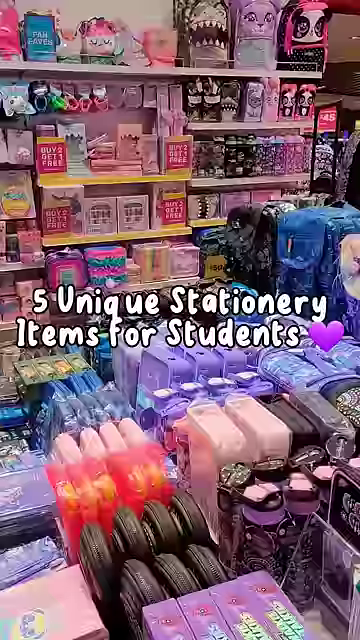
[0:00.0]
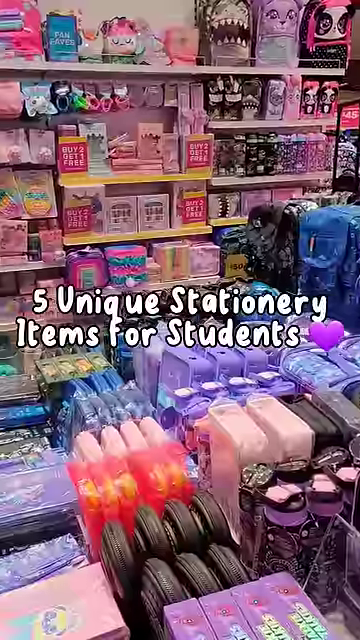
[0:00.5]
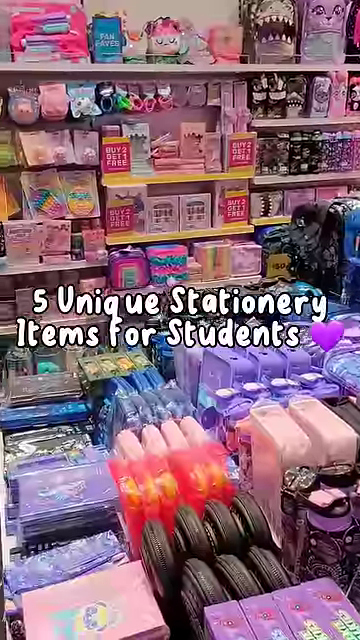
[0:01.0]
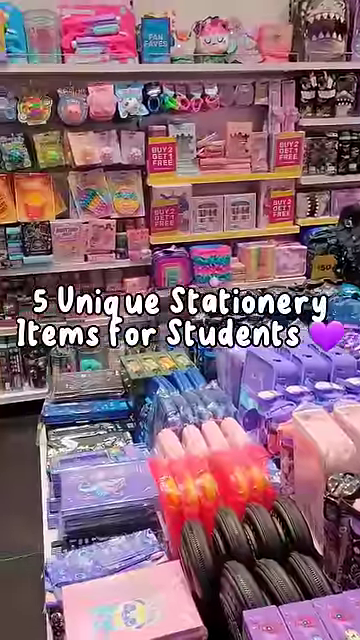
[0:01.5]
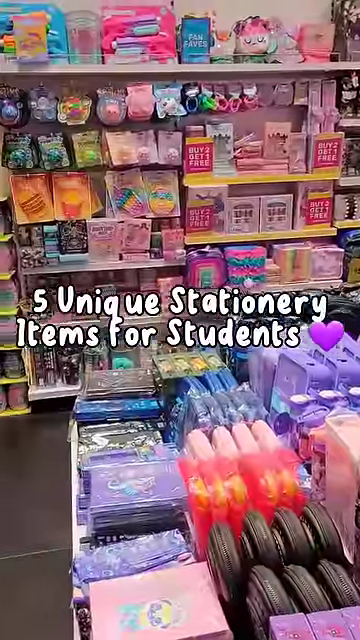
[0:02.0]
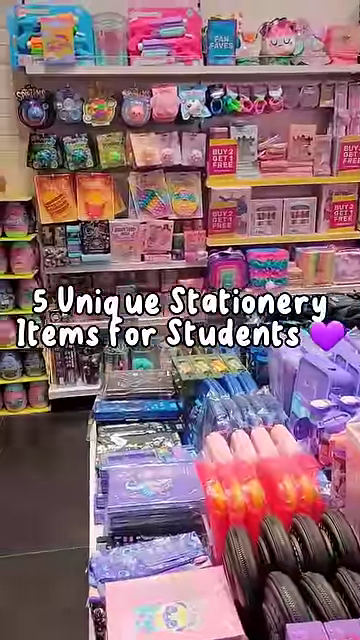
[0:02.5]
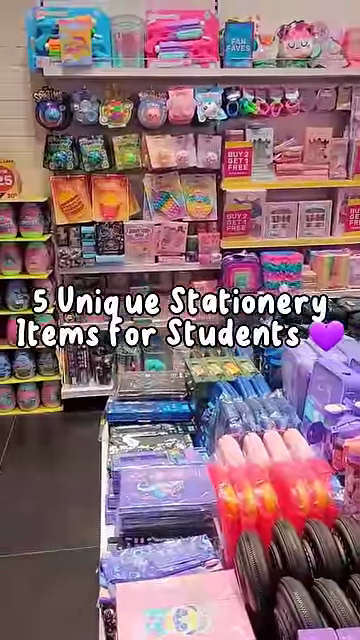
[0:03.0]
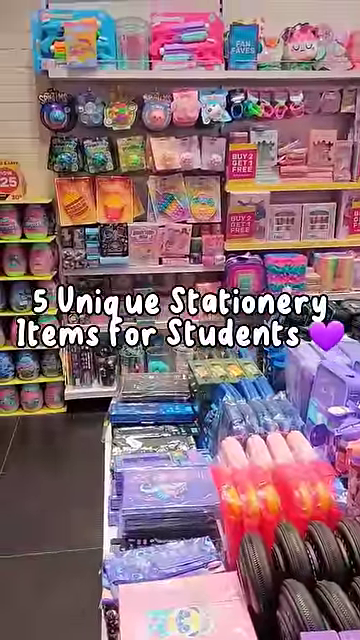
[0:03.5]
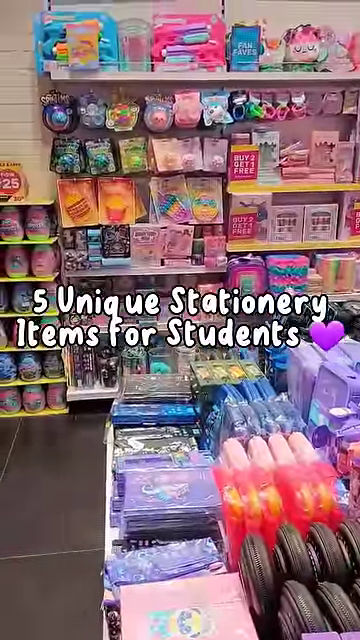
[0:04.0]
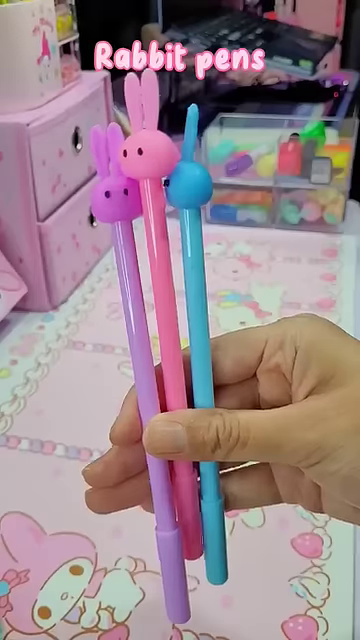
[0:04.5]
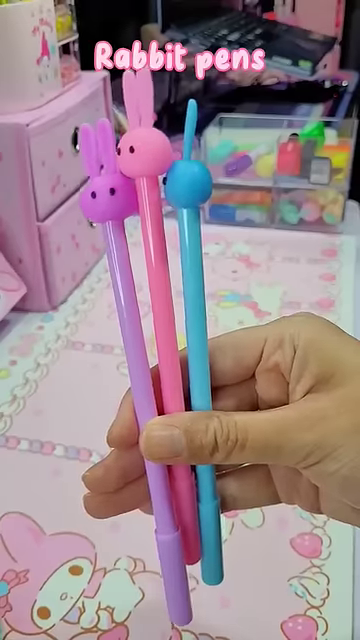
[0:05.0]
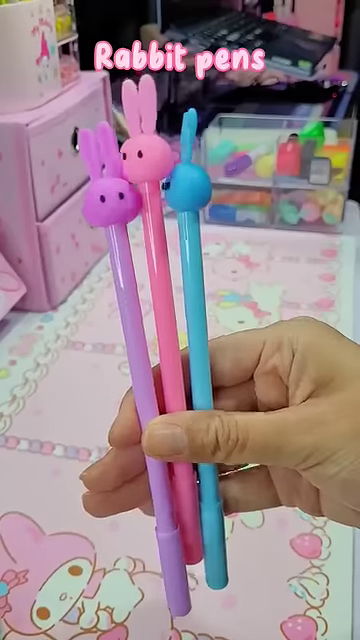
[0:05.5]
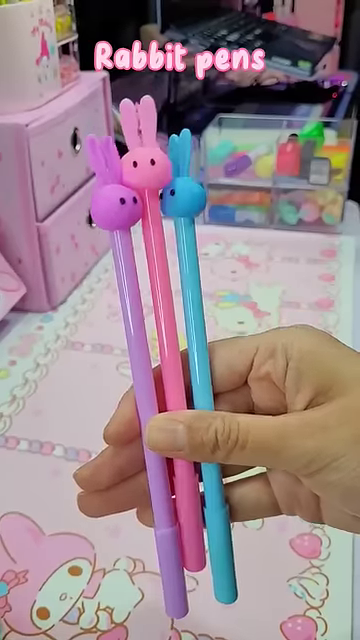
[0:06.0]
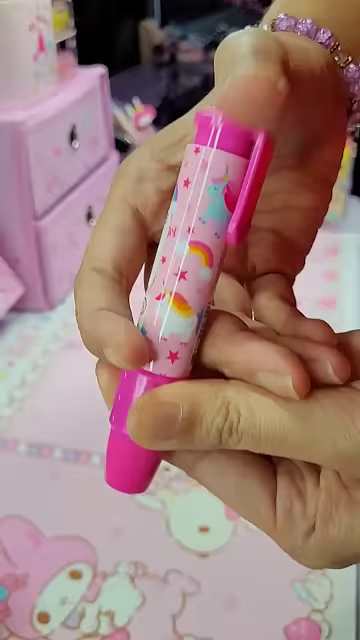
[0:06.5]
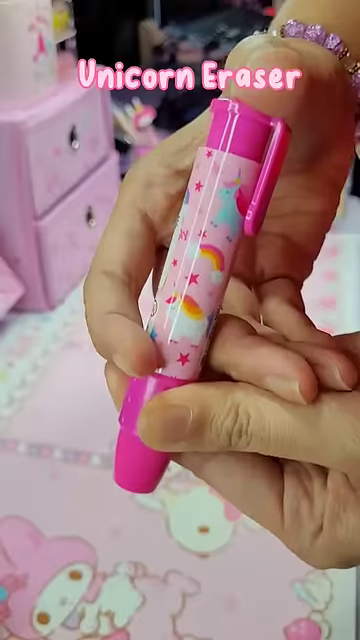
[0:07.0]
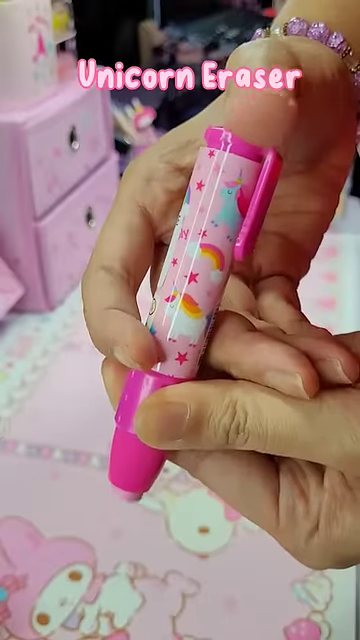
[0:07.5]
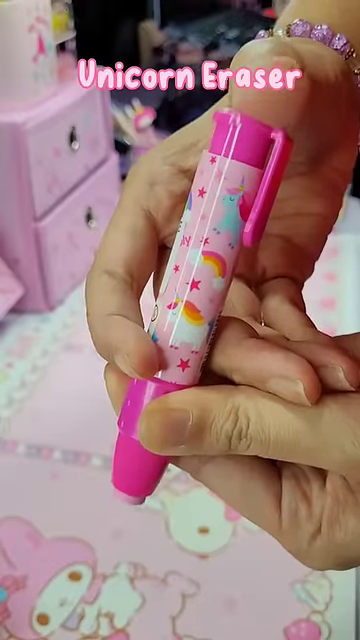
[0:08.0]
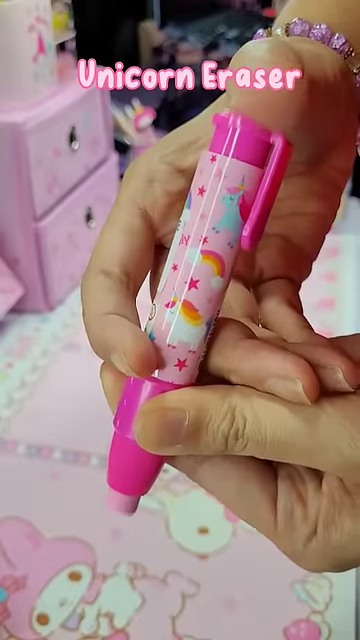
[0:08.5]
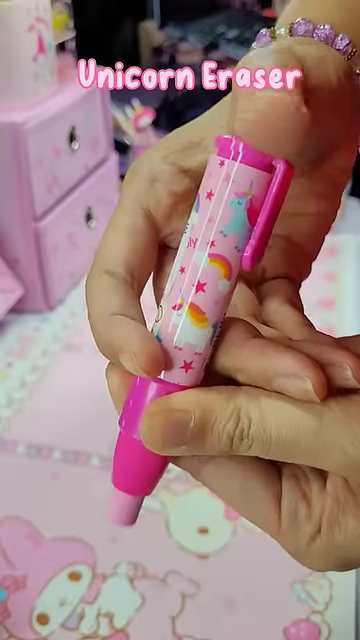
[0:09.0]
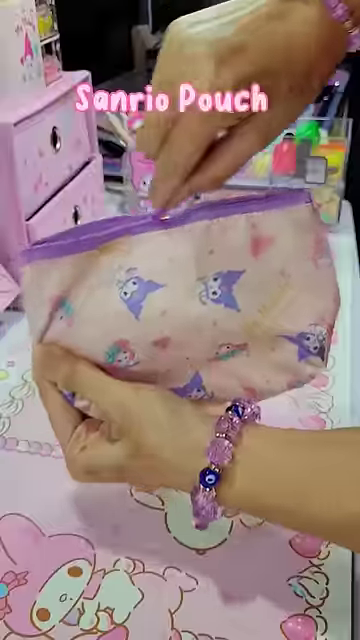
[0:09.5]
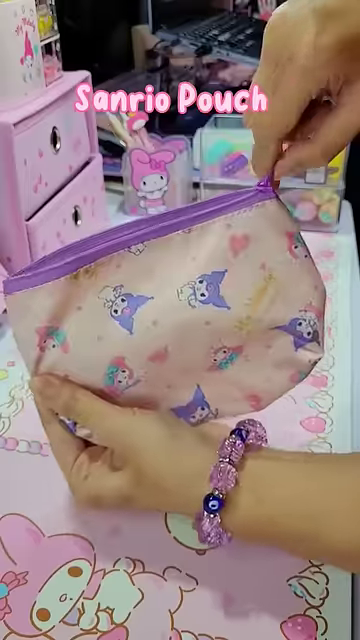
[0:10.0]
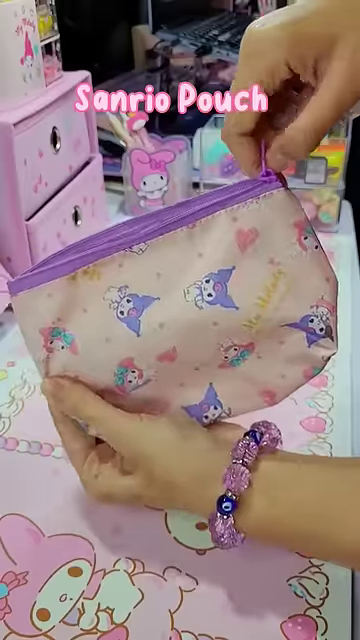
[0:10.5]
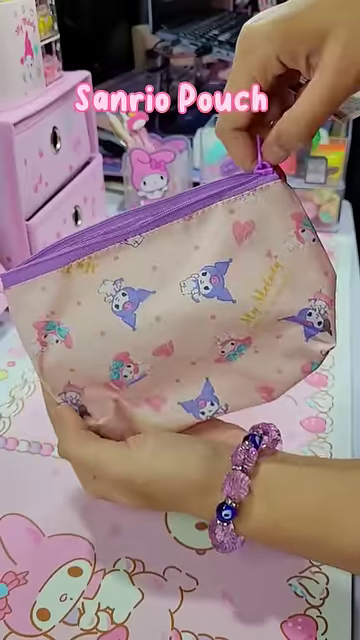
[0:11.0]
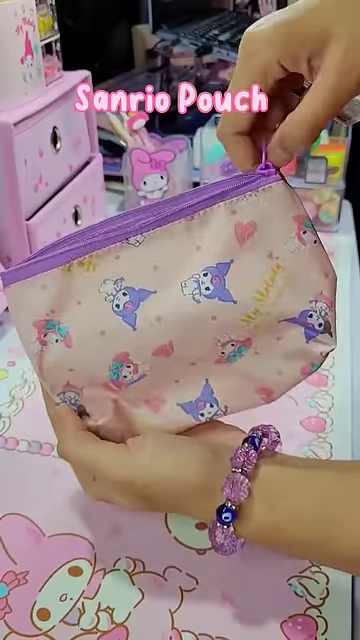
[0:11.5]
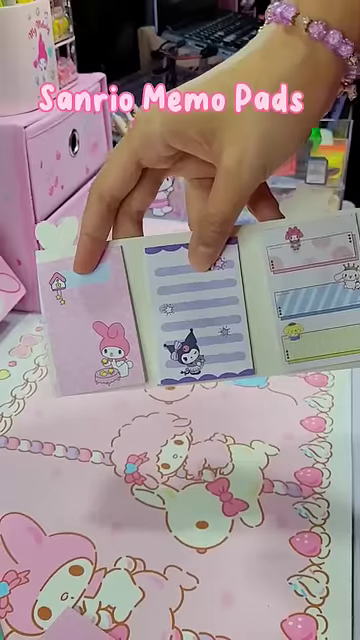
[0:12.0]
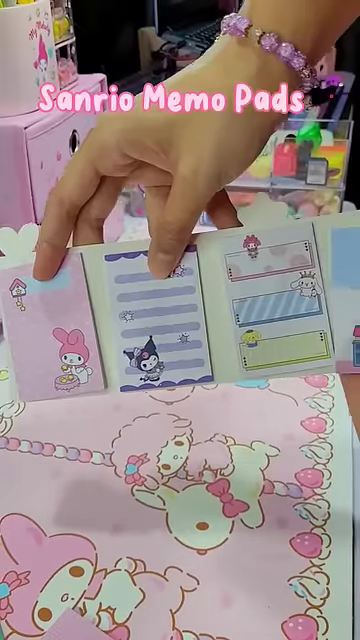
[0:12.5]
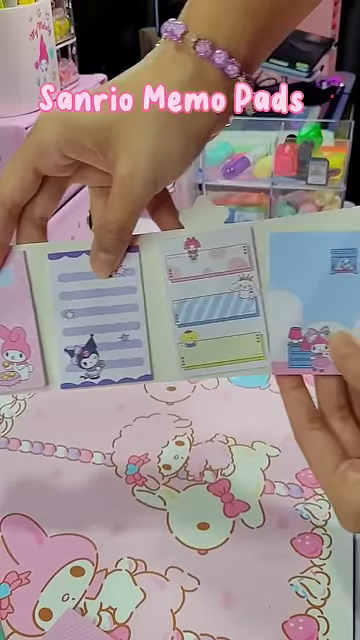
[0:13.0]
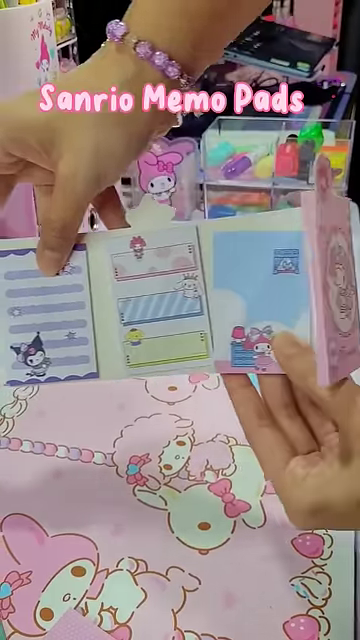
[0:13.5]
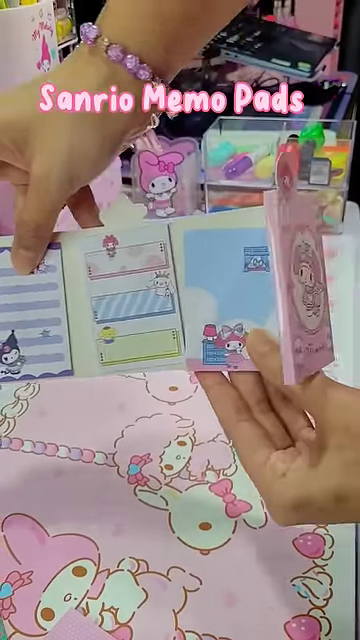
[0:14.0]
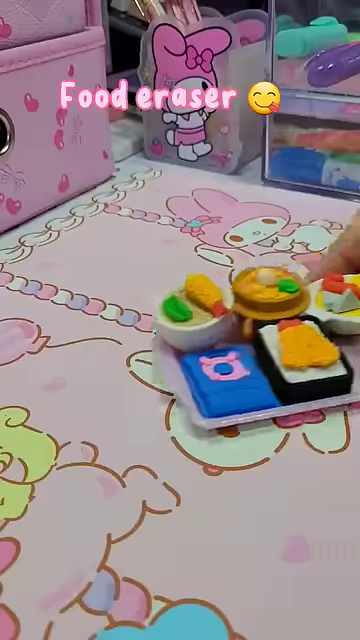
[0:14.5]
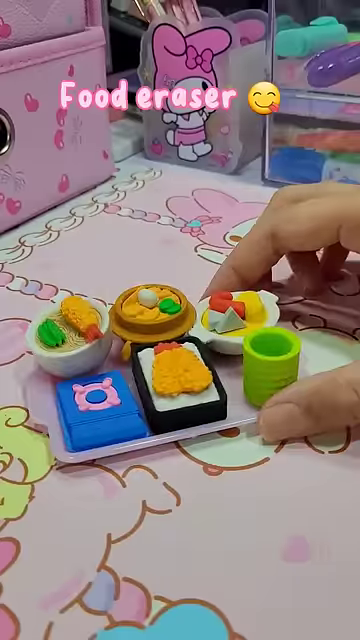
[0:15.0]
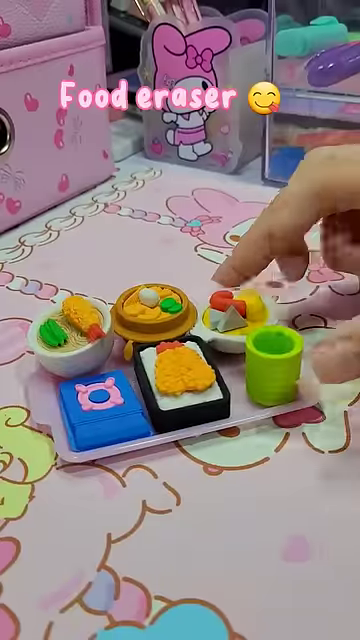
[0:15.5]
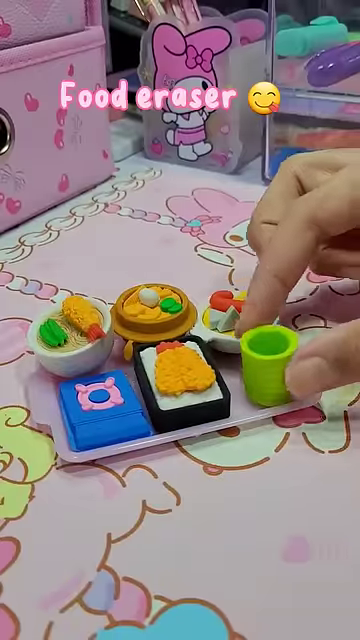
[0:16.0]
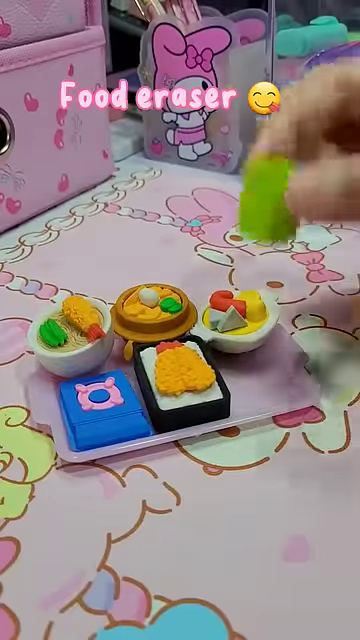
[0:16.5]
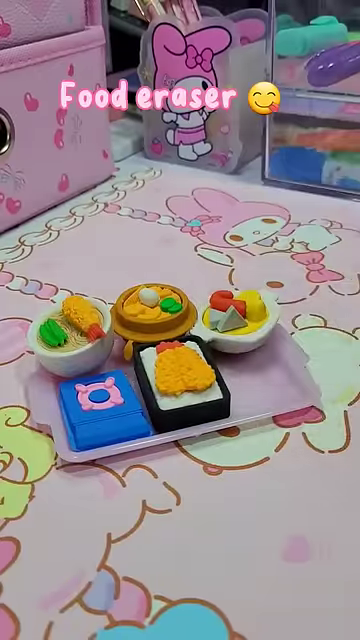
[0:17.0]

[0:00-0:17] This short TikTok video shows on-screen text reading "five unique stationary items for students." The items shown are a rabbit pin, a unicorn eraser, a Sanrio pouch, Sanrio memo pads, and a food eraser. All of the items are brightly colored, and many of them are pink and girlish; they look almost as though they are meant for children, maybe elementary students, apparently girls under 10. It looks like the video was filmed inside a house, with one location possibly being a store that sells these items.